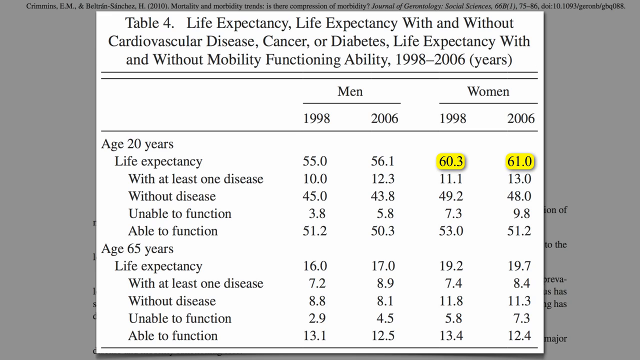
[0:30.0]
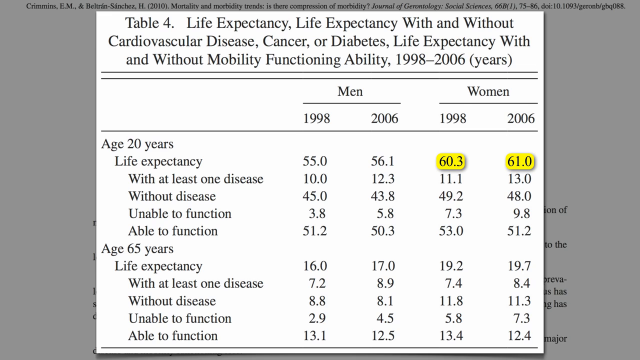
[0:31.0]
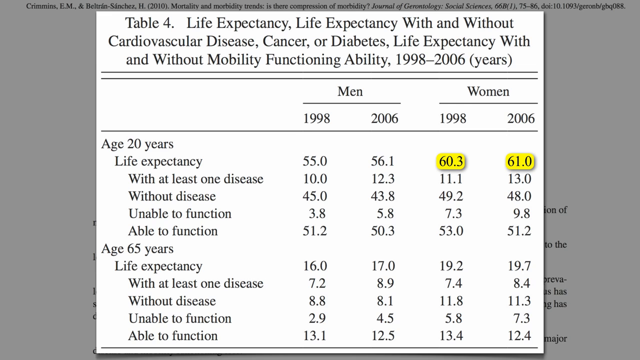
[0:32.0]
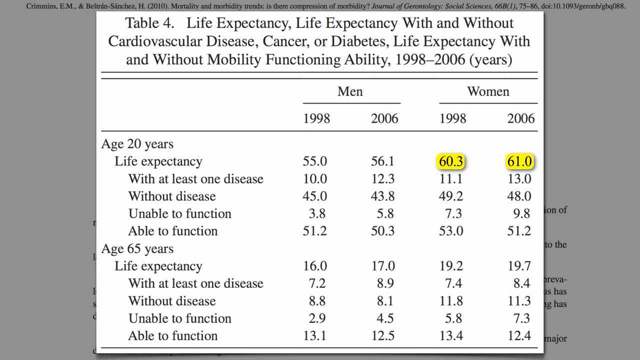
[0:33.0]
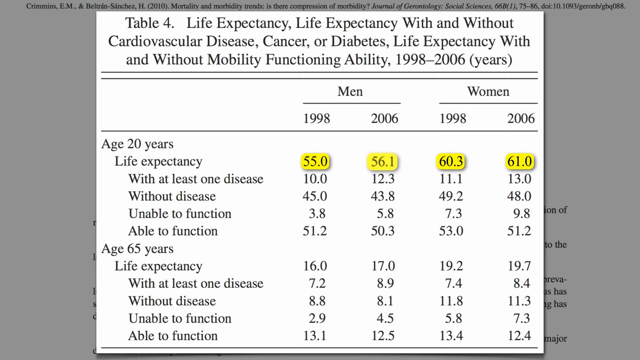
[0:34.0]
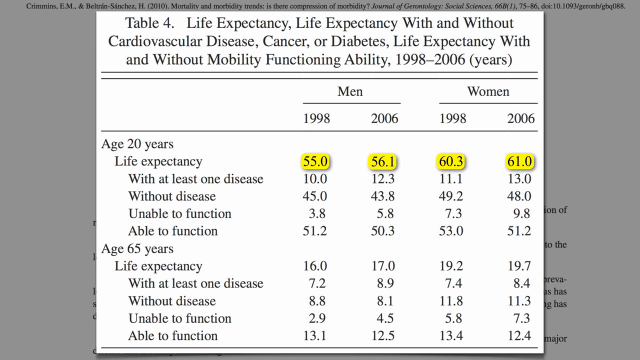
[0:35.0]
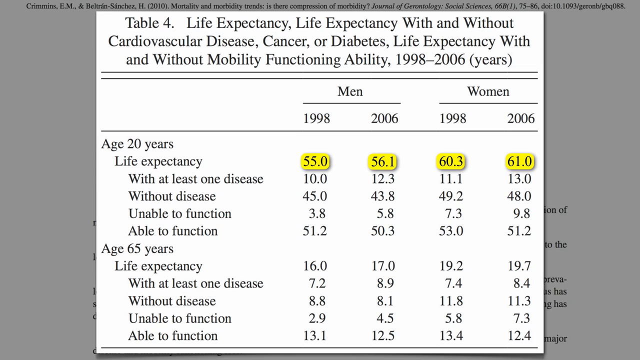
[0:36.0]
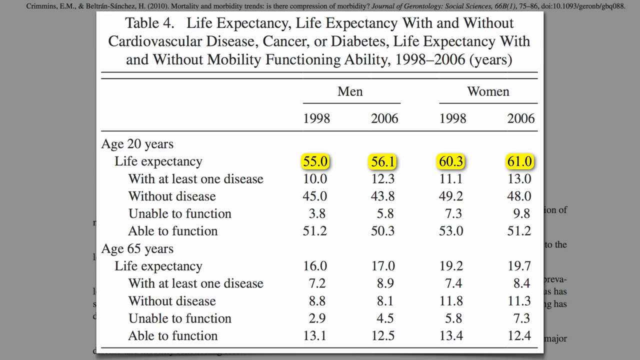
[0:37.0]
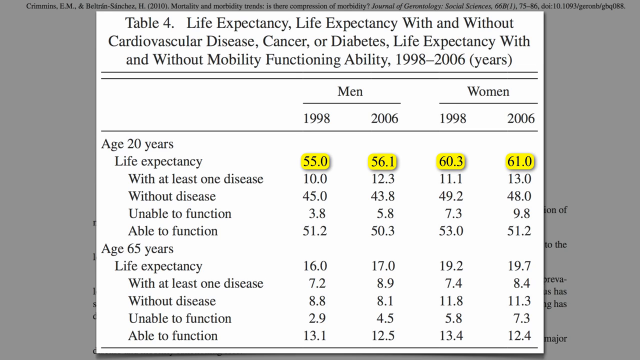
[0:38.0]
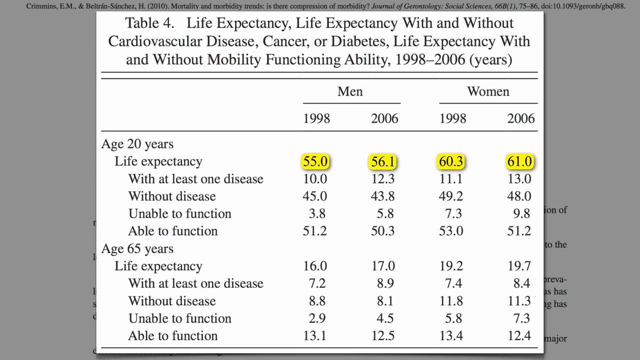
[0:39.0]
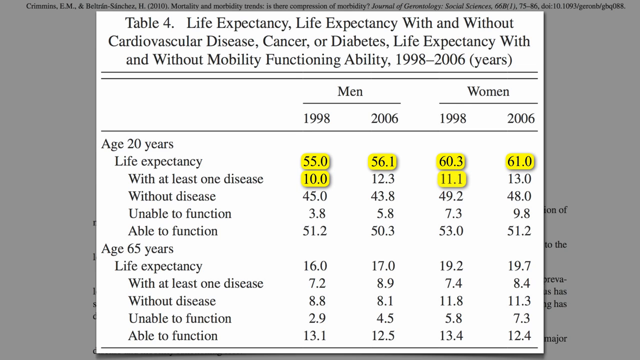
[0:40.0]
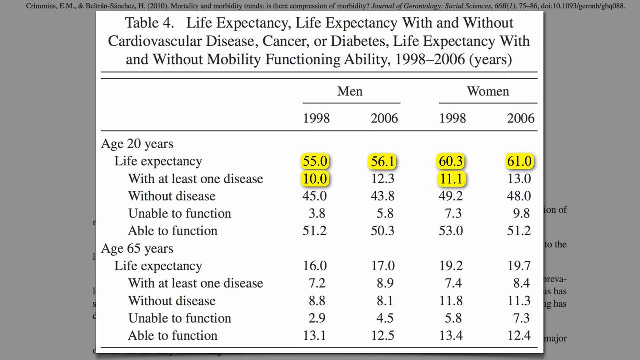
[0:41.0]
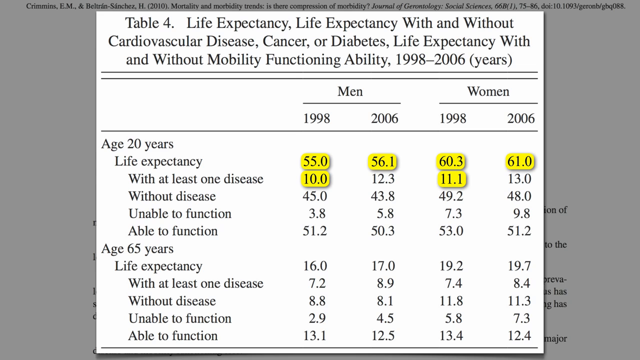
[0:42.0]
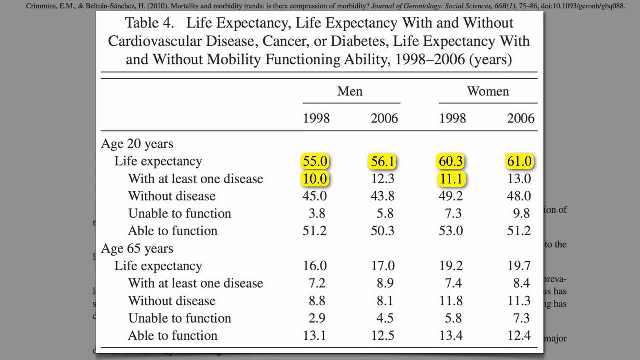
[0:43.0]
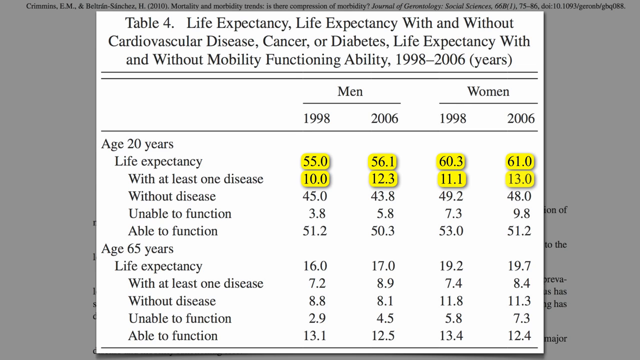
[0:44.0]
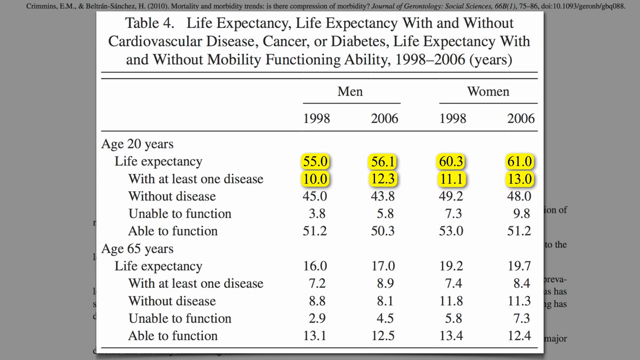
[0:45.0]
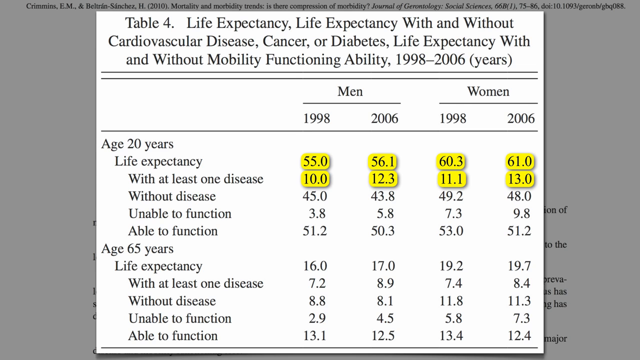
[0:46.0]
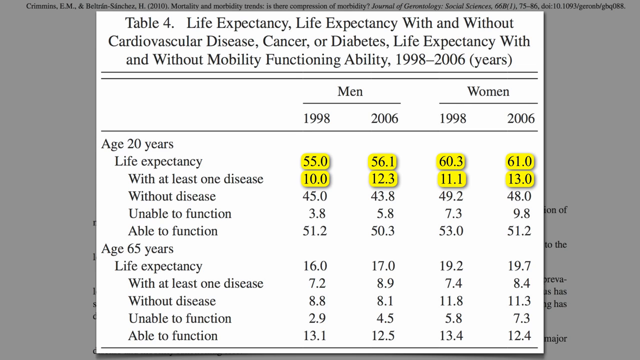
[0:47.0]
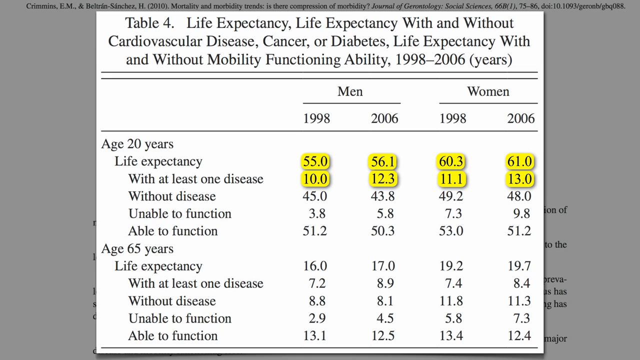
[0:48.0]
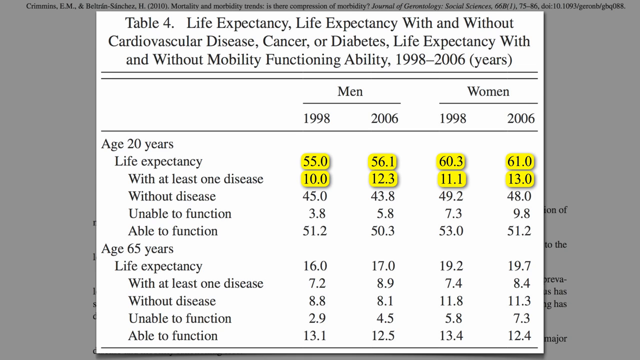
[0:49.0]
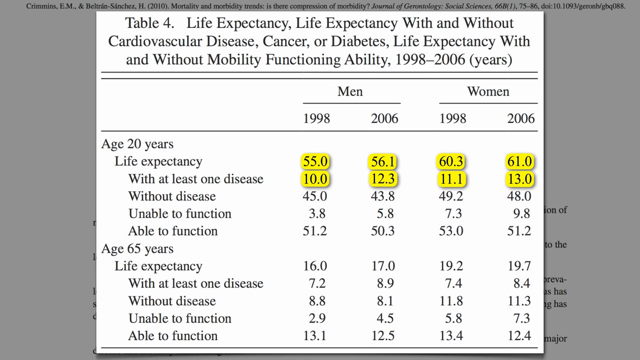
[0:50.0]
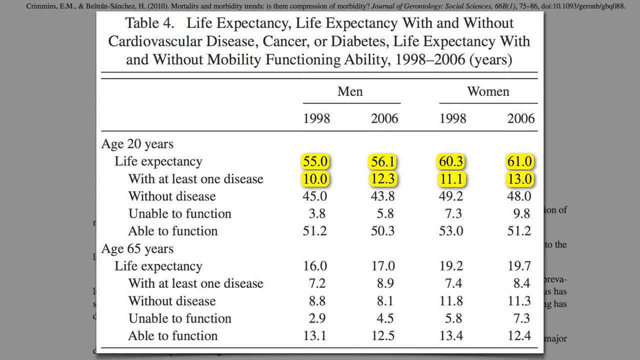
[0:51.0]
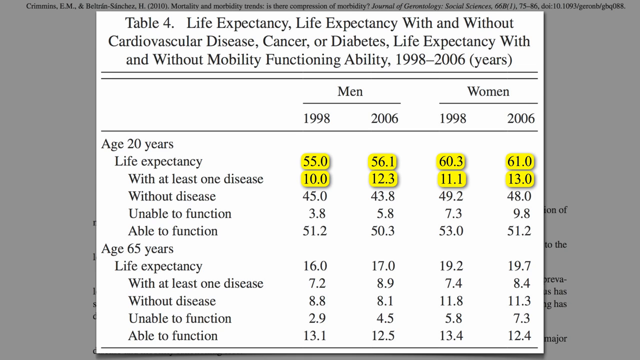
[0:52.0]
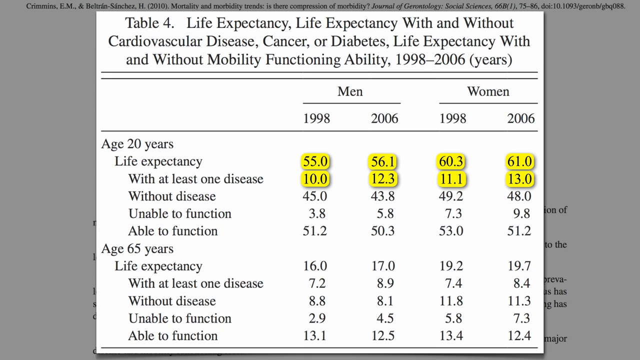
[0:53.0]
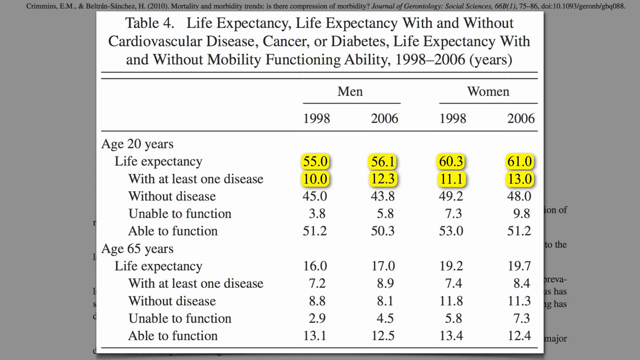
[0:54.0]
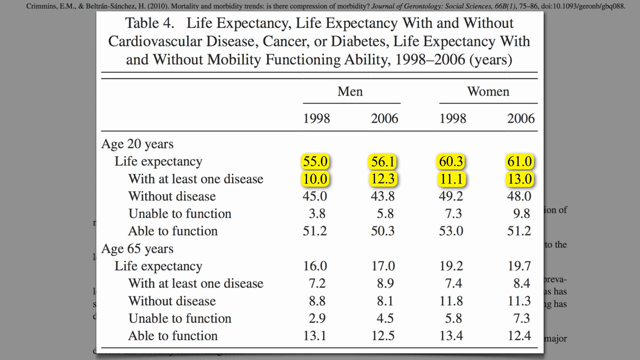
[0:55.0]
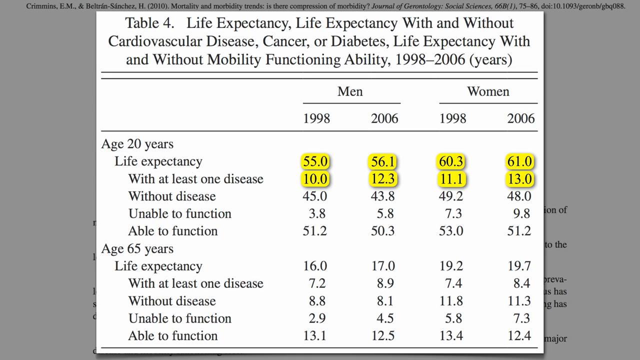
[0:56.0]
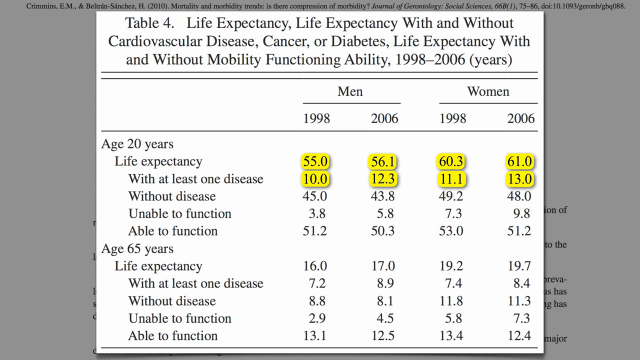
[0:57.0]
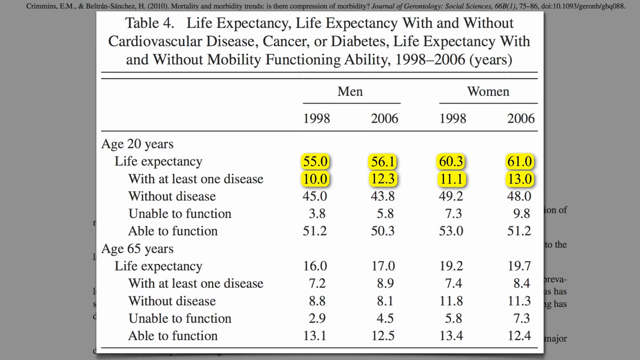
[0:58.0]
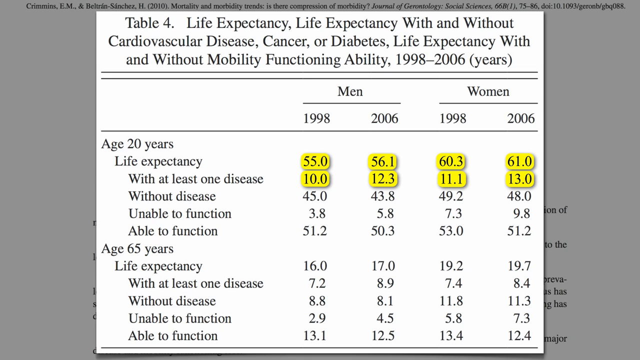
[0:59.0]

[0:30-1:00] Figures in the table are highlighted, starting with the life expectancy of women at age 20 years: the 60.3 below 1990 and the 61.0 below 2006. Next, the same figures for men are highlighted, 55.0 and 56.1. The highlighting then moves down one row, to average life expectancy with at least one disease at age 20 years: 10 years for men in 1988 and 11.1 for women. Then the two 2006 figures in that row are highlighted: 12.3 for men and 13.0 for women.